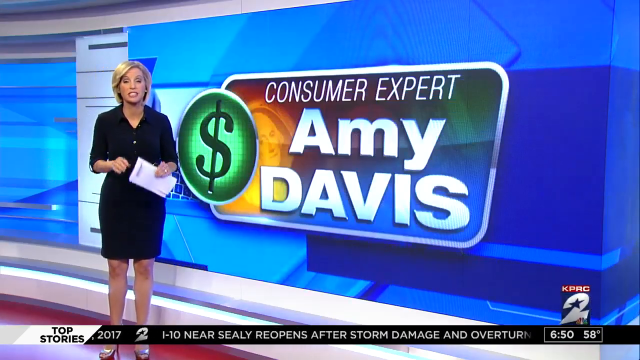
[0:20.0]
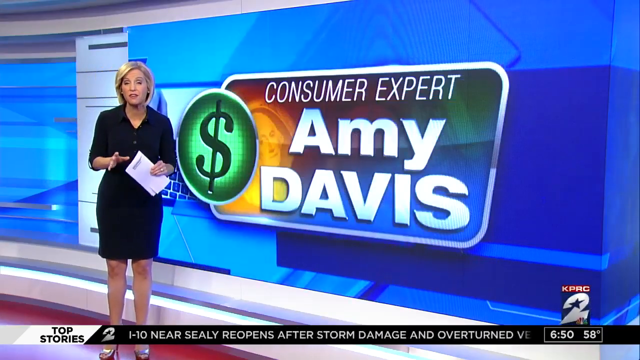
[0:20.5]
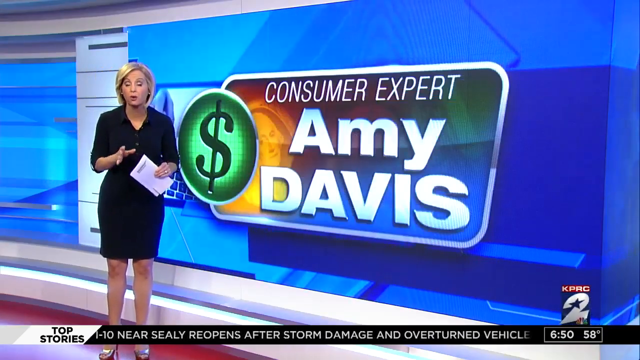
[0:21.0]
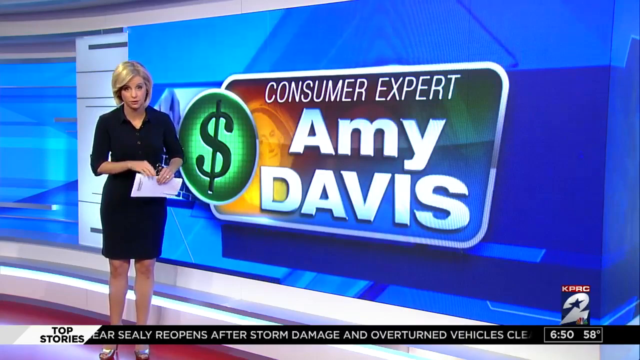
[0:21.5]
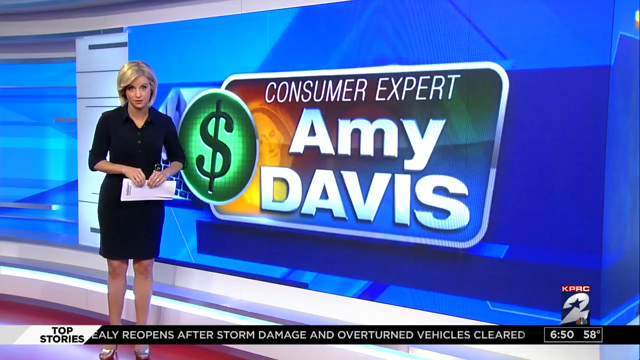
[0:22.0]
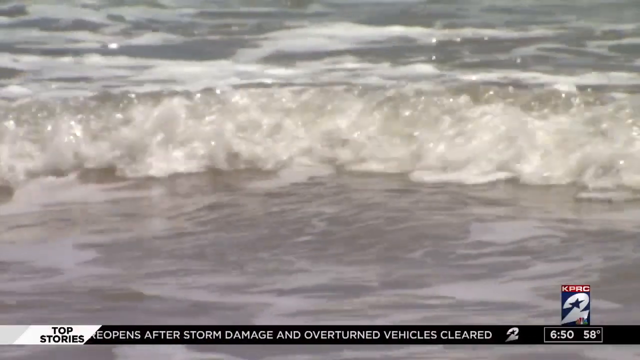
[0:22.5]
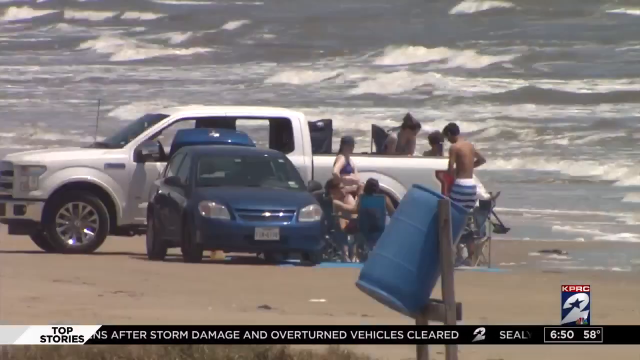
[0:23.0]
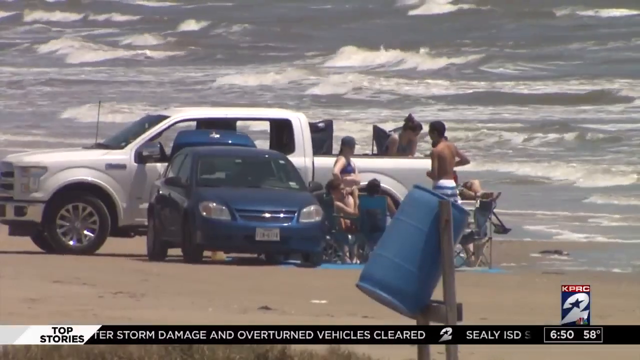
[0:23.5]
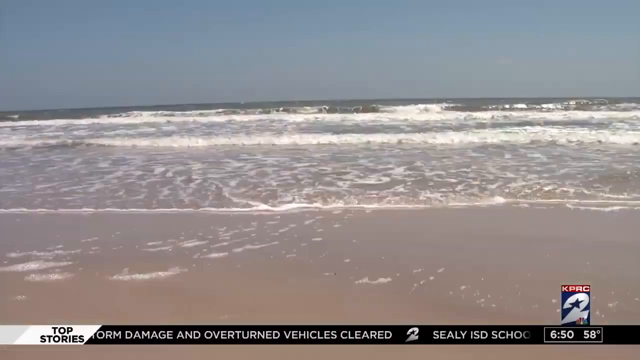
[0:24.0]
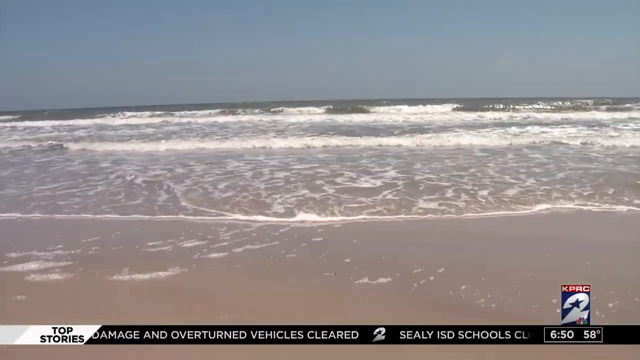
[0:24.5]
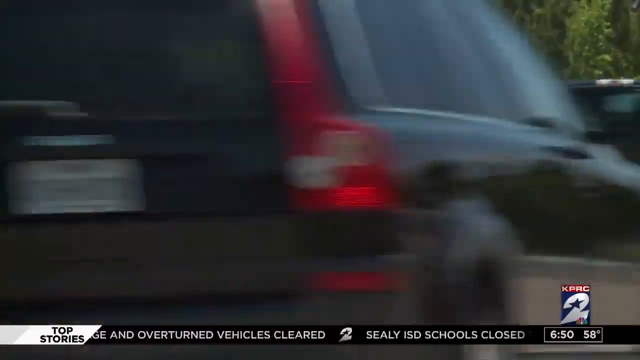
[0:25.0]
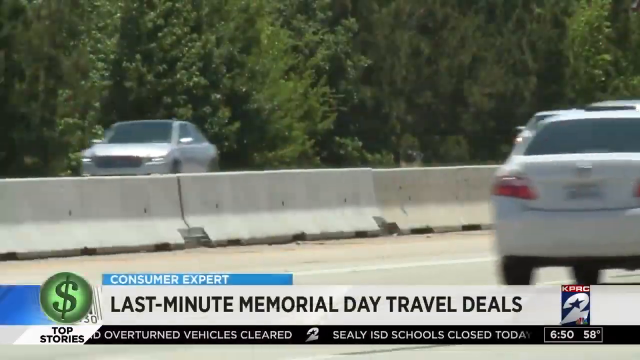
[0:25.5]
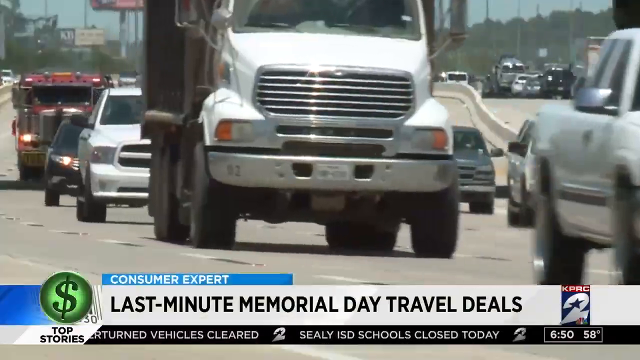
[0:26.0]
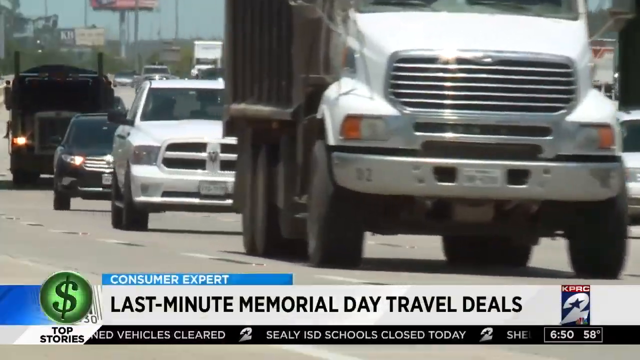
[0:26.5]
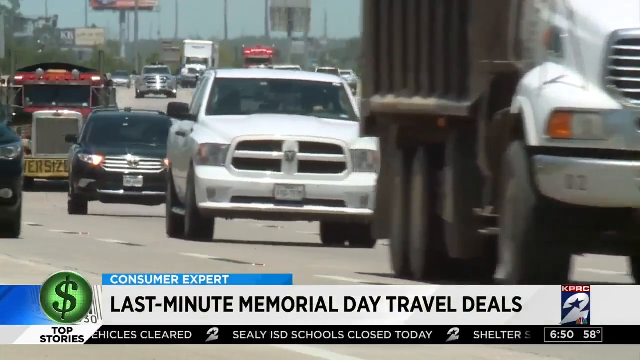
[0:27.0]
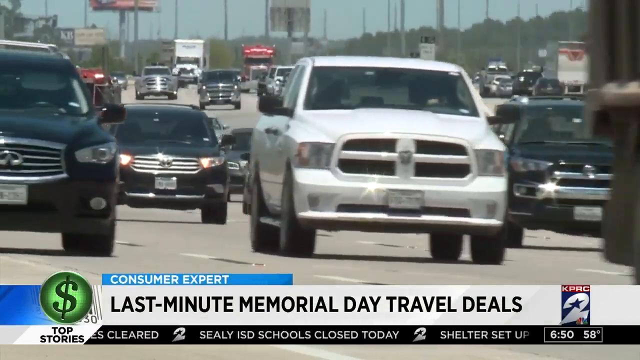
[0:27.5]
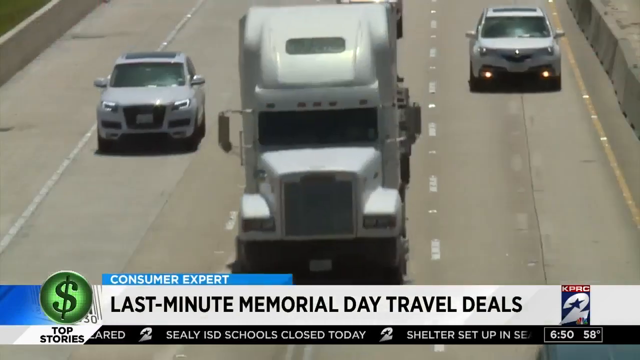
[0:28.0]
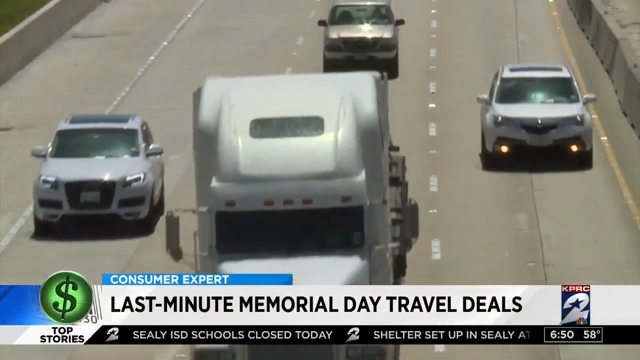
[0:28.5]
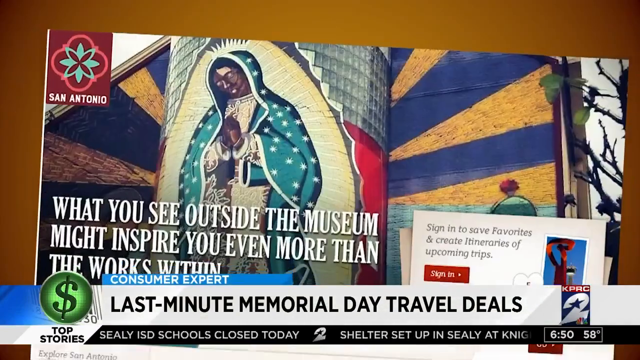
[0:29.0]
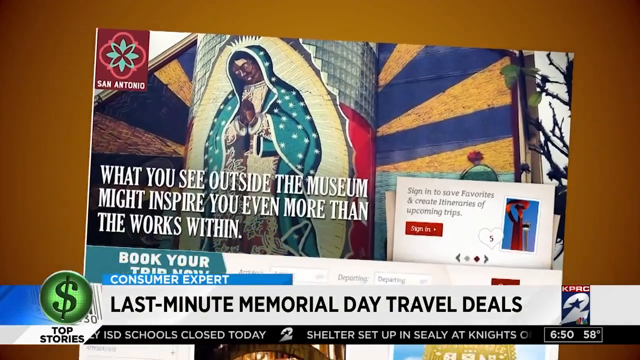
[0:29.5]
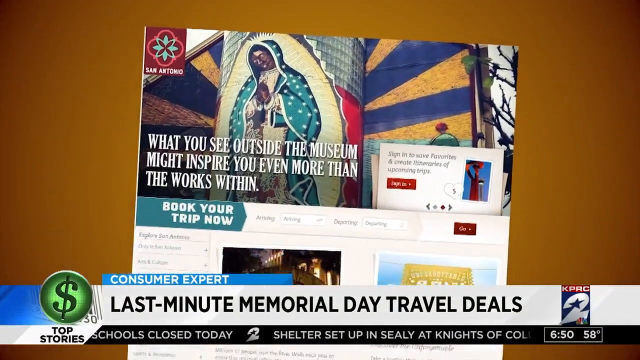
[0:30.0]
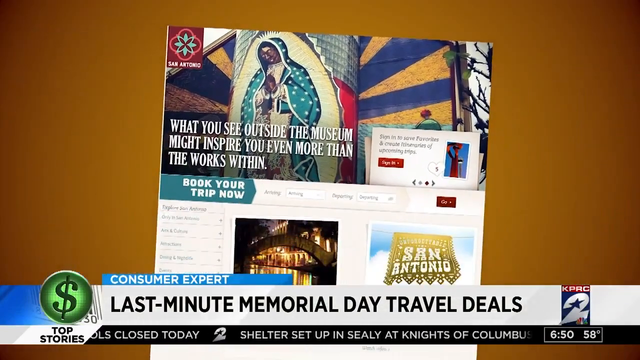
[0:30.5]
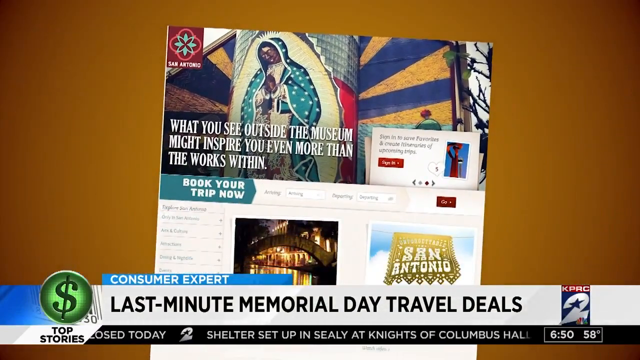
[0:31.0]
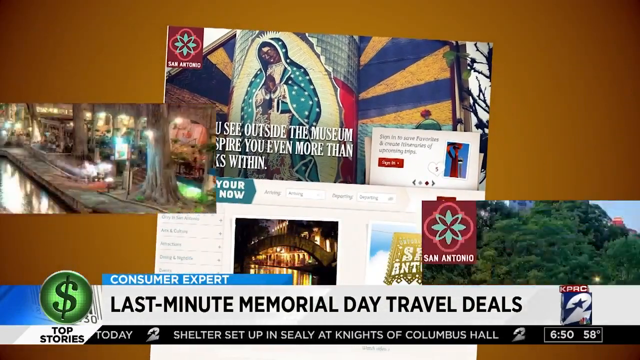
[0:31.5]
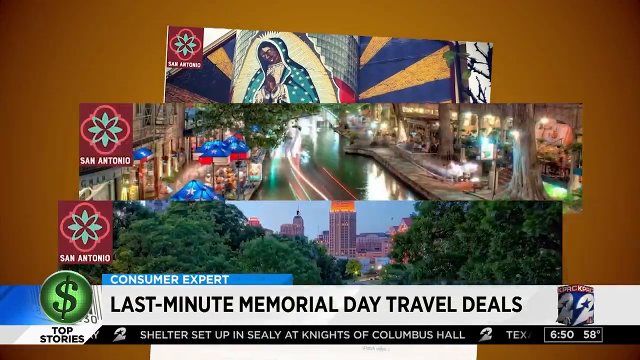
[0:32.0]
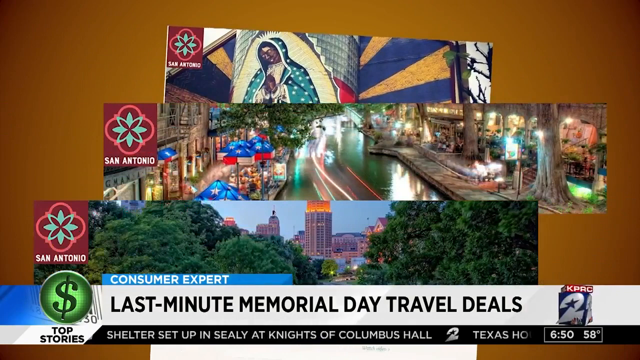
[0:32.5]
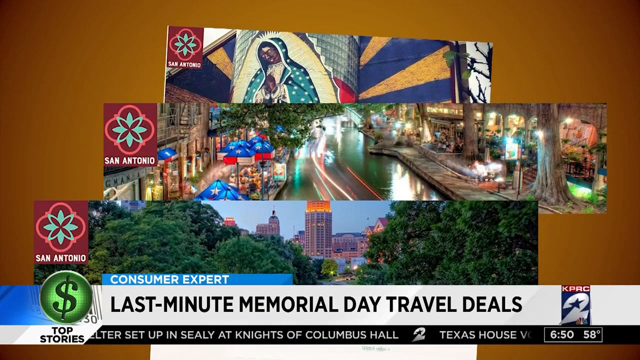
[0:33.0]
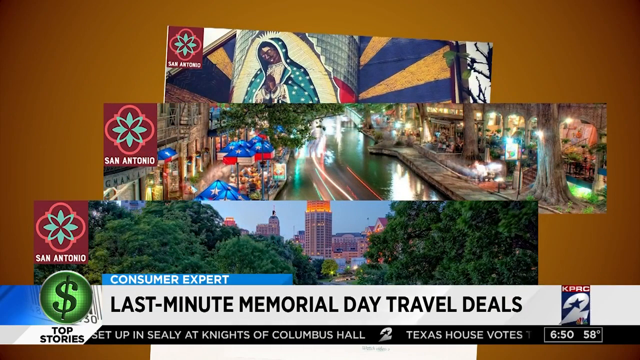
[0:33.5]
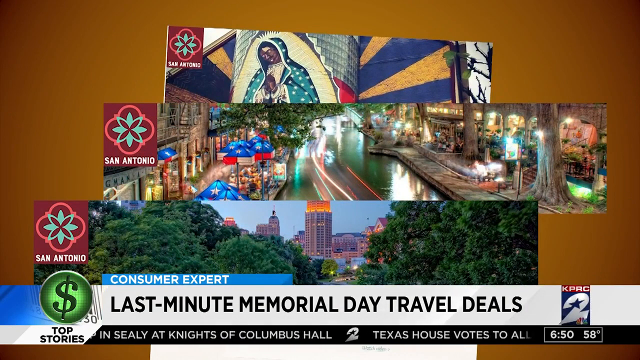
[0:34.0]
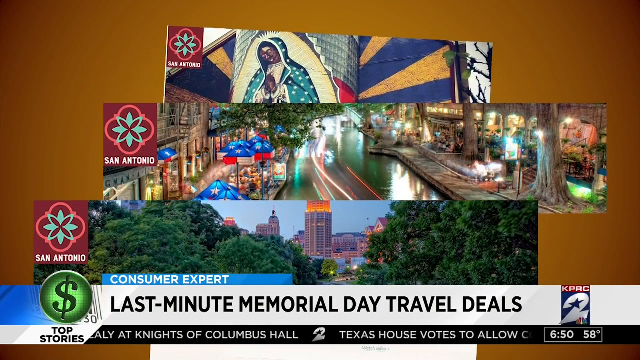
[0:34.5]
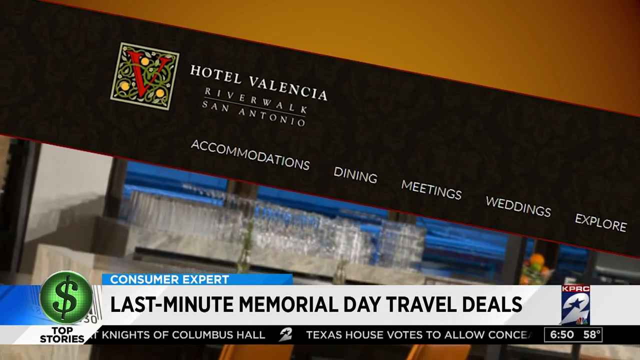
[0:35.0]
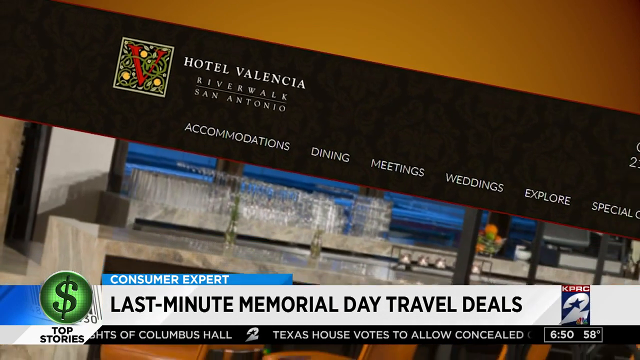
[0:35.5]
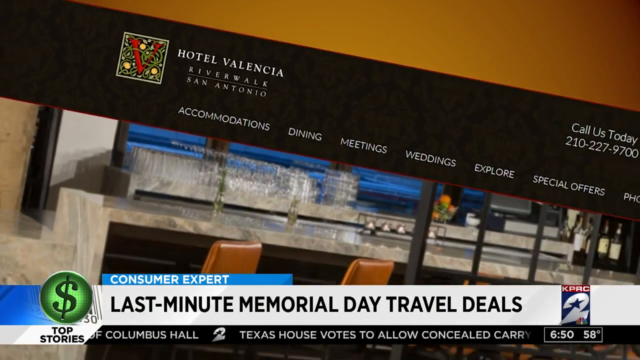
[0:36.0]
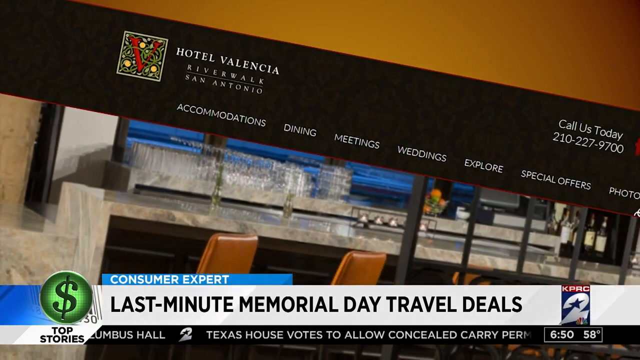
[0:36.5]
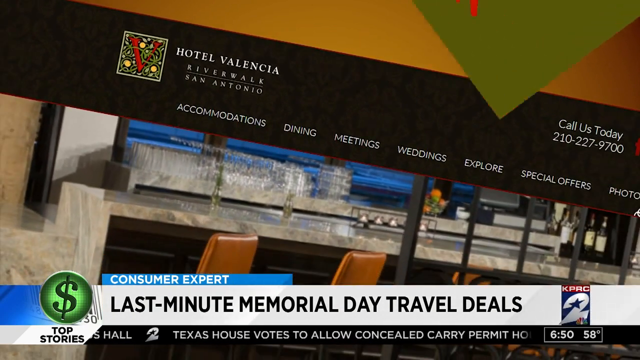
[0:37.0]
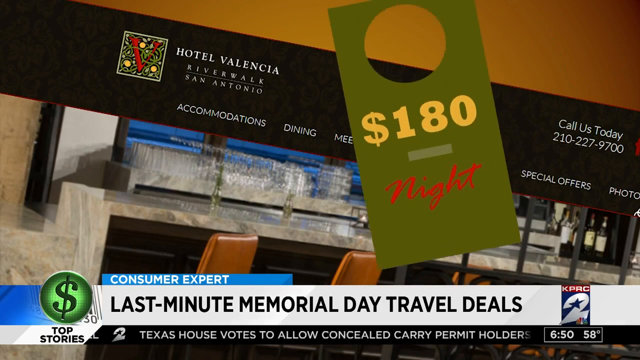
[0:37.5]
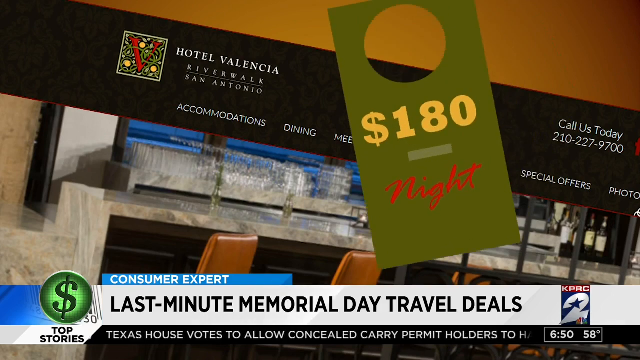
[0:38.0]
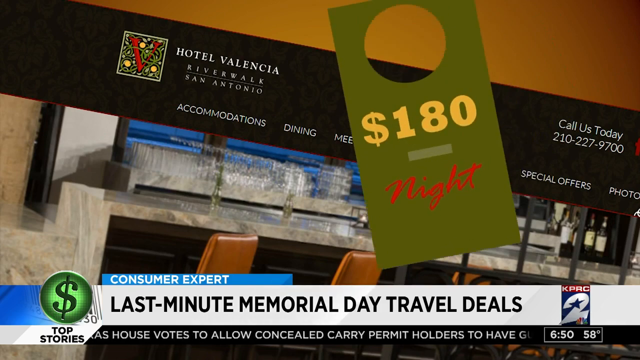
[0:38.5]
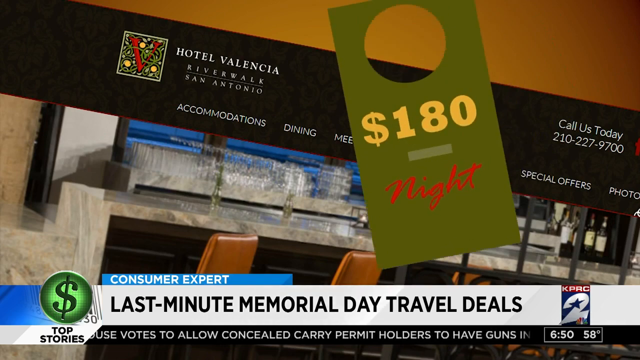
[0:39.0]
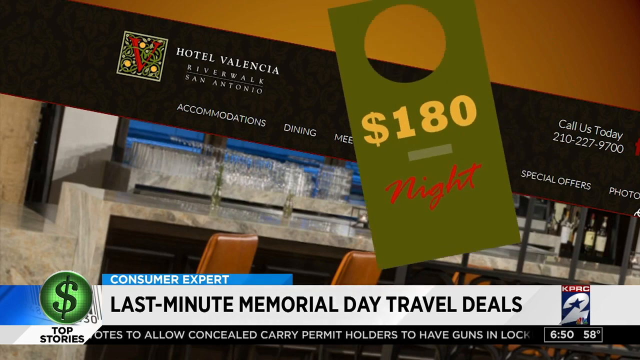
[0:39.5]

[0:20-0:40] Amy Davis continues to talk. She has short blonde hair that kind of curves around her head and toward her neck, and she wears a black dress that ends right above the knee. On her left hand is a ring that is kind of shiny and gold. The video cuts to seawater crashing onto a beach, then to people on the beach with their cars and trucks. A white truck and a blue car are right next to each other and look like they are together, and there are chairs right outside the beach; the people are relaxing on the beach alongside their cars. Next comes footage of a highway with many cars rapidly going across. Text at the bottom reads "last minute Memorial Day travel deals," and a number of different places to go are shown.